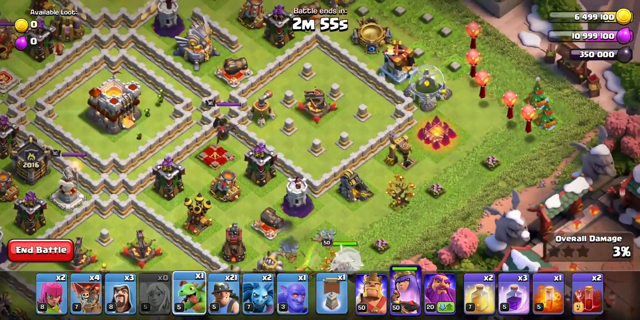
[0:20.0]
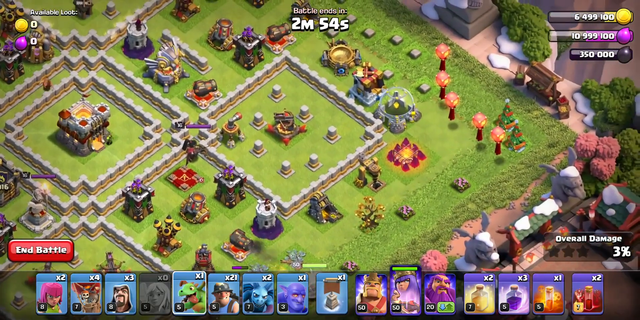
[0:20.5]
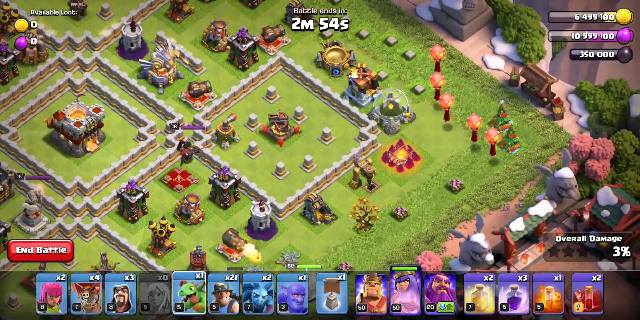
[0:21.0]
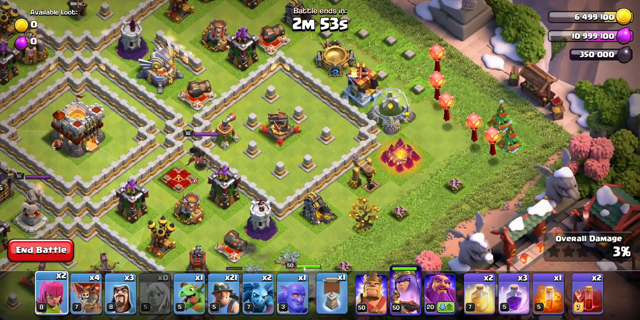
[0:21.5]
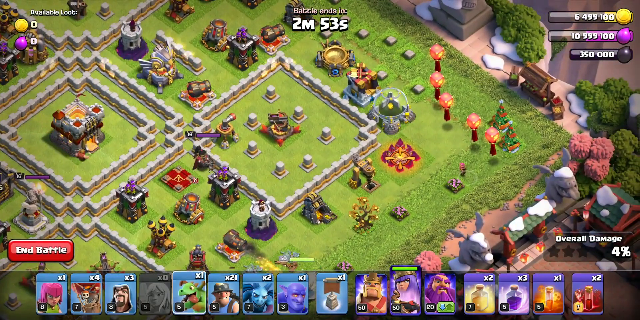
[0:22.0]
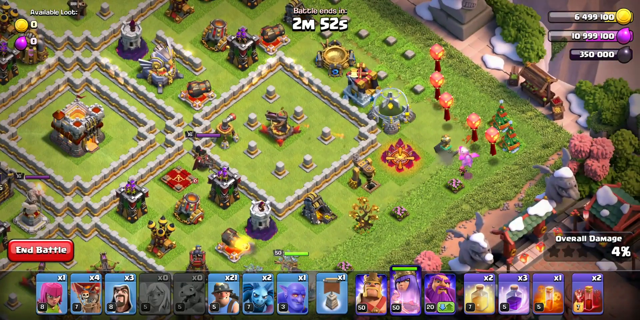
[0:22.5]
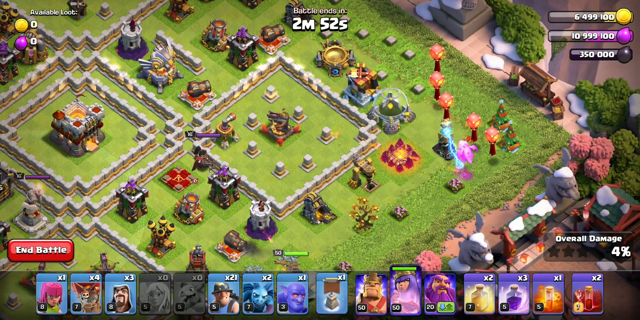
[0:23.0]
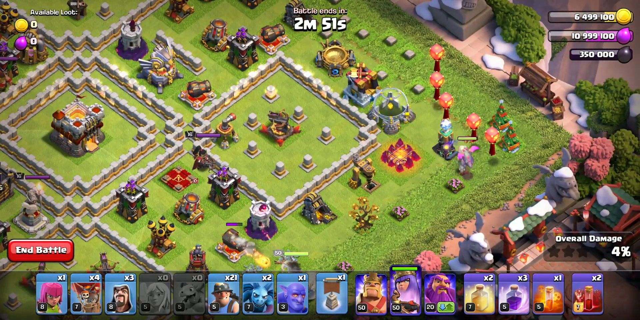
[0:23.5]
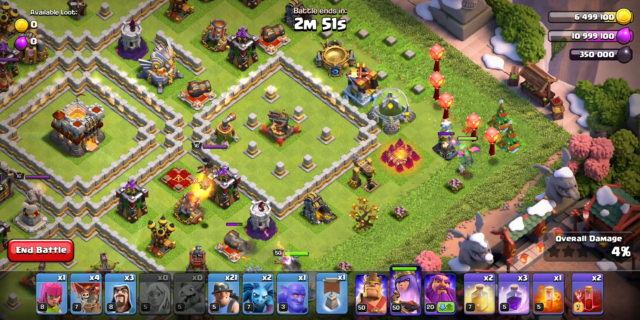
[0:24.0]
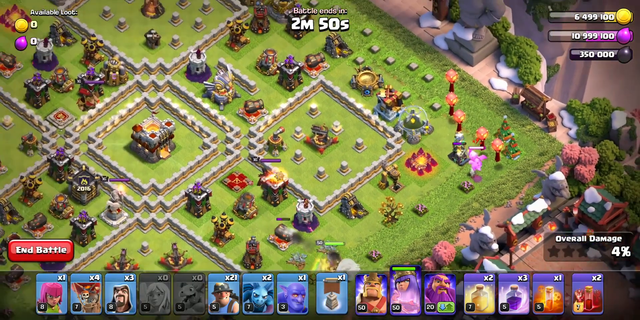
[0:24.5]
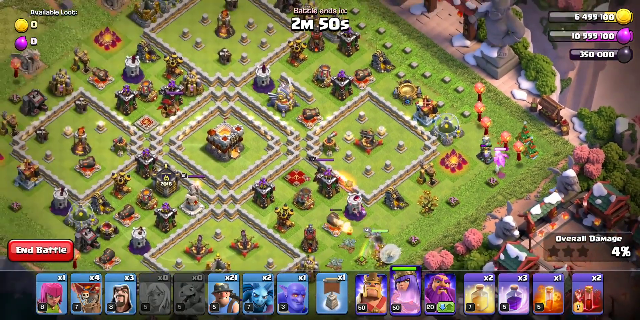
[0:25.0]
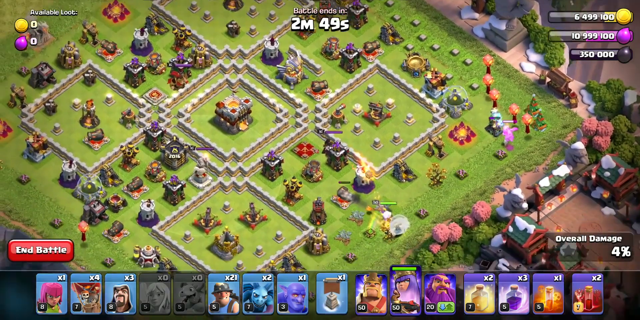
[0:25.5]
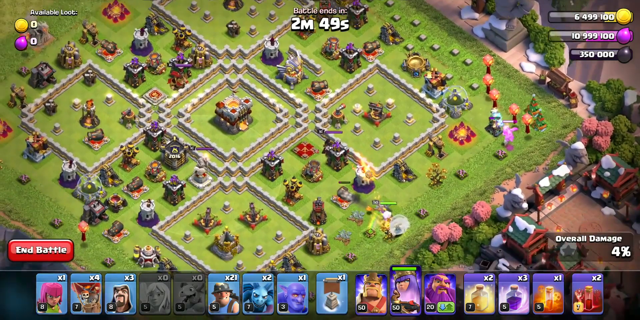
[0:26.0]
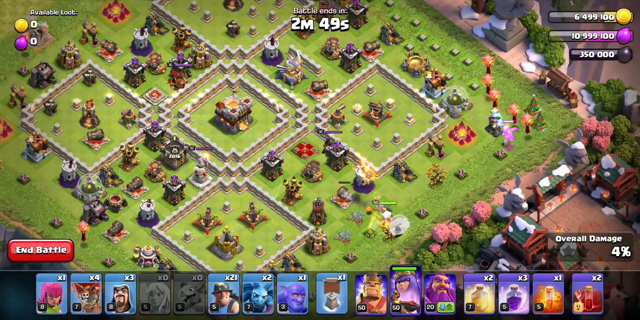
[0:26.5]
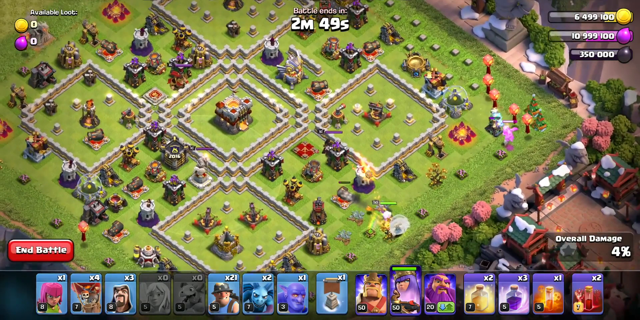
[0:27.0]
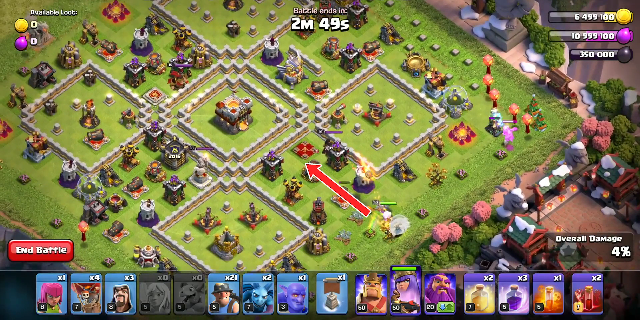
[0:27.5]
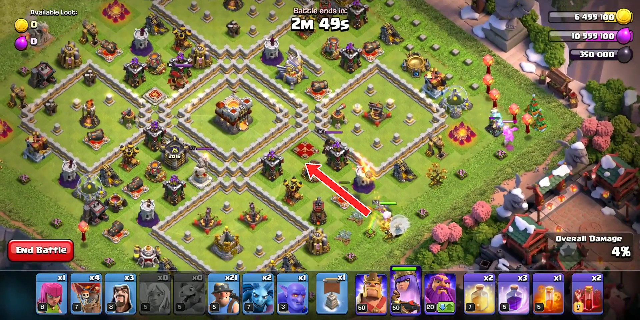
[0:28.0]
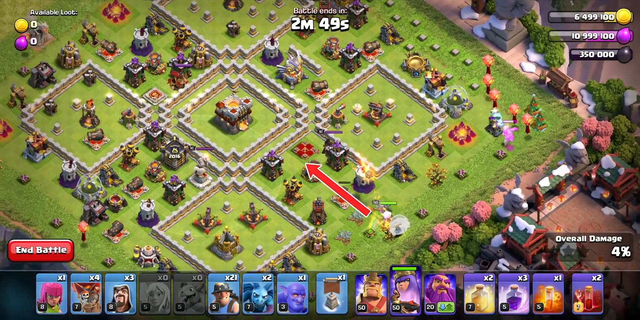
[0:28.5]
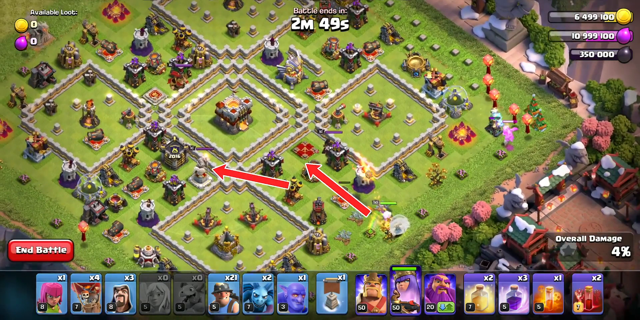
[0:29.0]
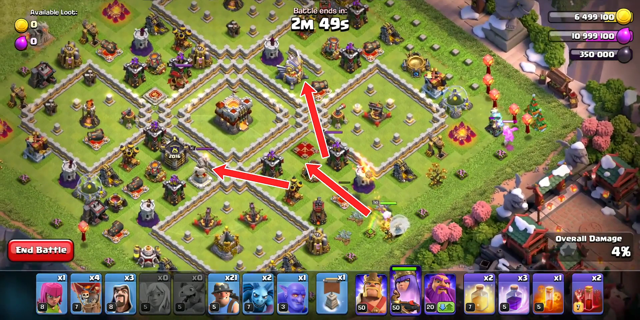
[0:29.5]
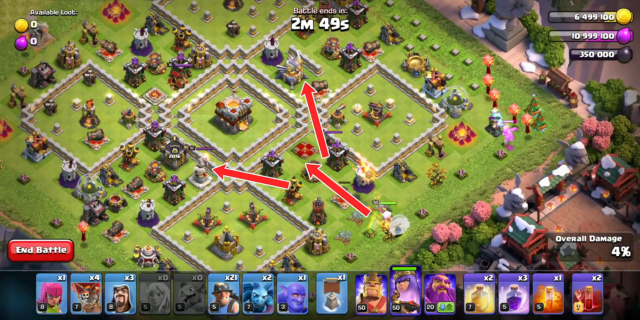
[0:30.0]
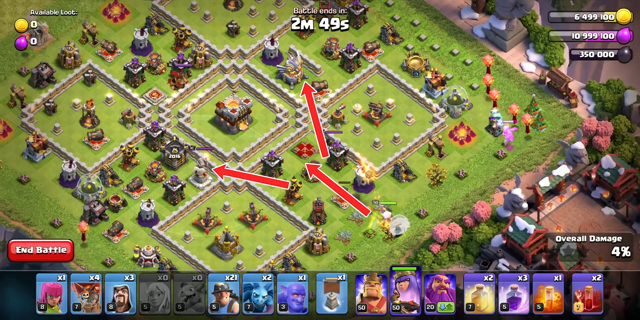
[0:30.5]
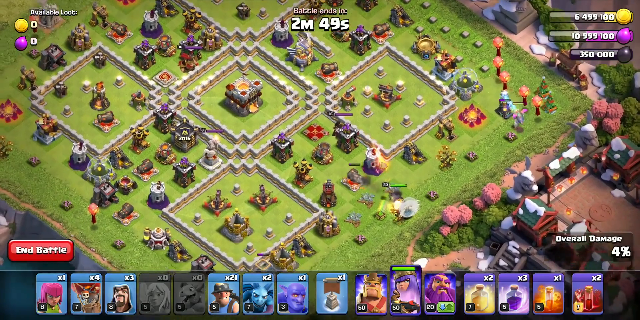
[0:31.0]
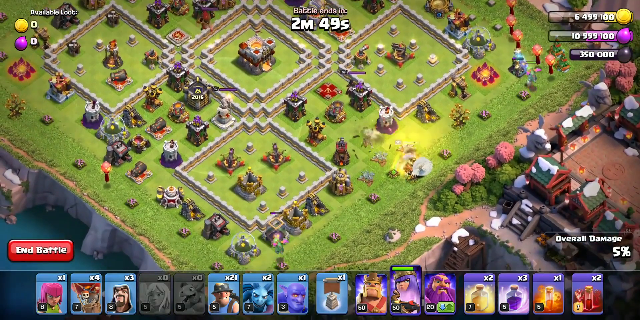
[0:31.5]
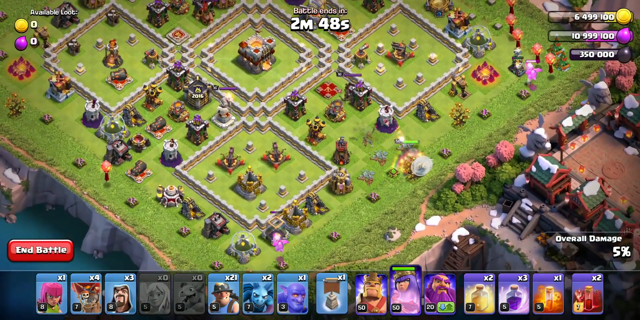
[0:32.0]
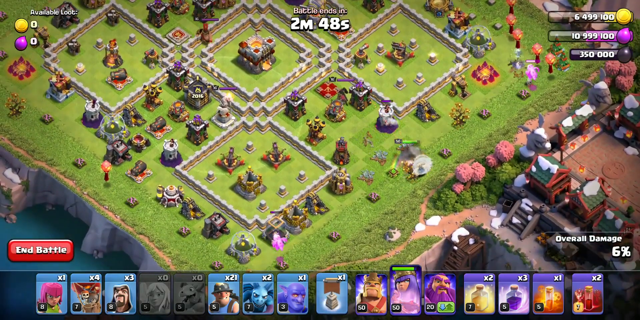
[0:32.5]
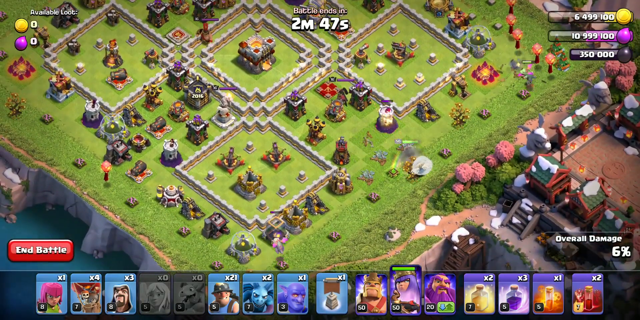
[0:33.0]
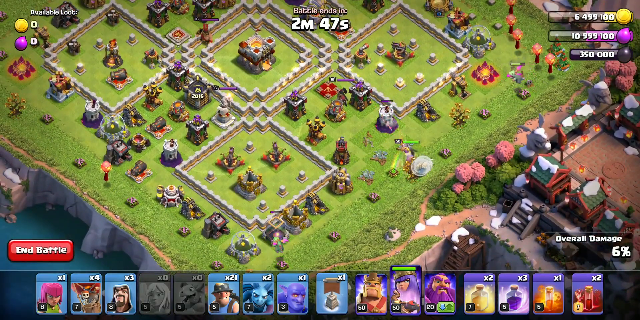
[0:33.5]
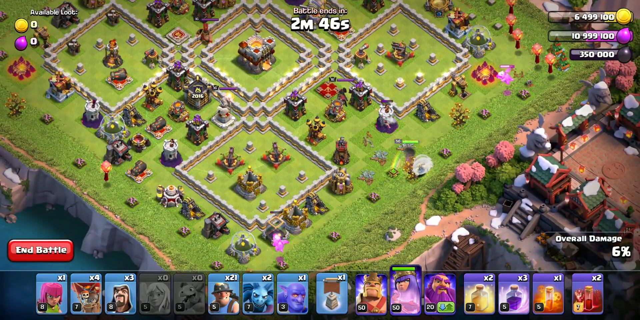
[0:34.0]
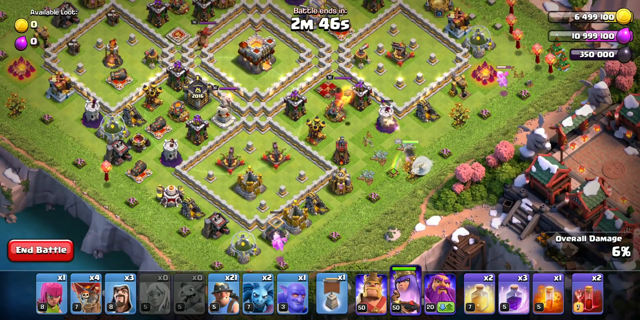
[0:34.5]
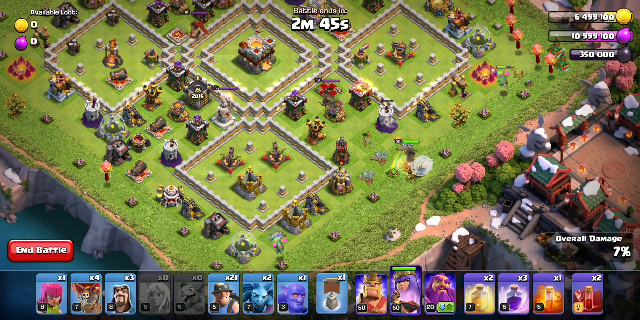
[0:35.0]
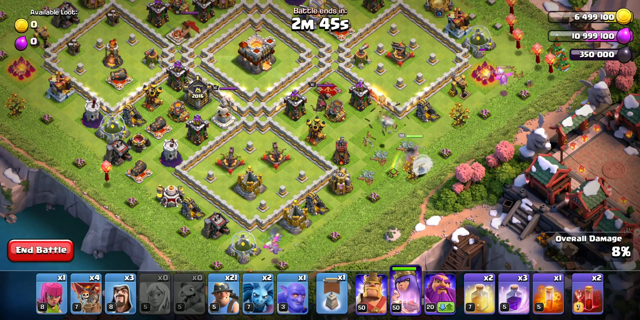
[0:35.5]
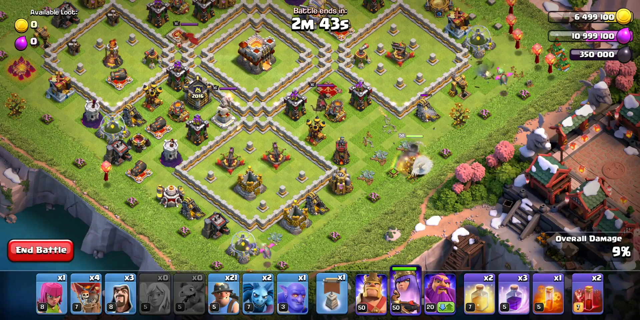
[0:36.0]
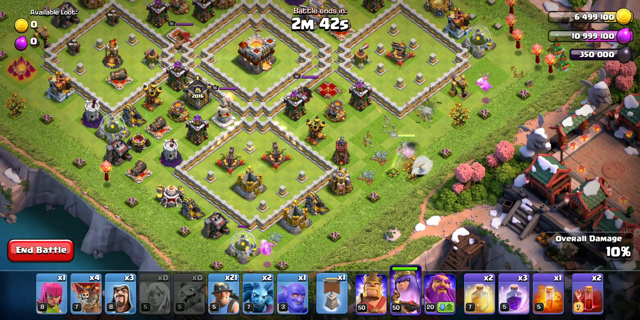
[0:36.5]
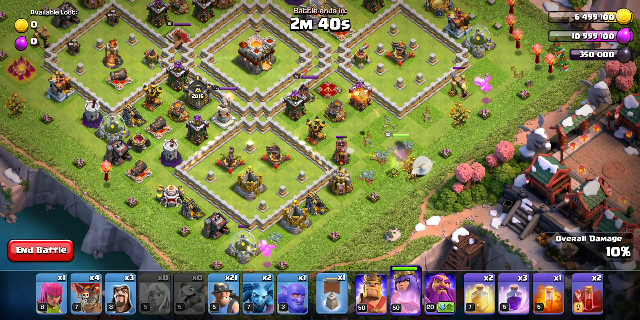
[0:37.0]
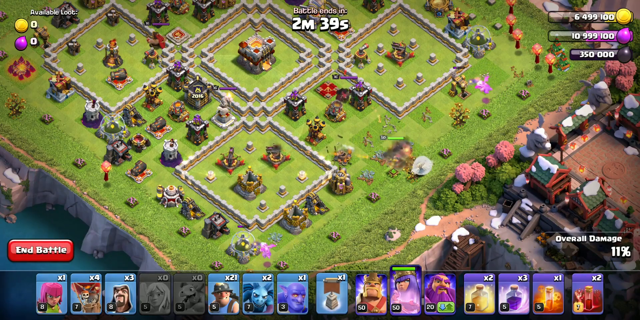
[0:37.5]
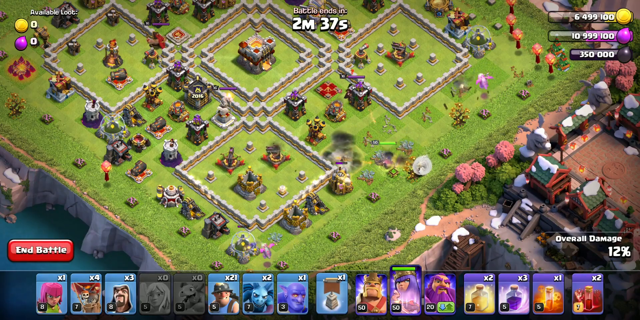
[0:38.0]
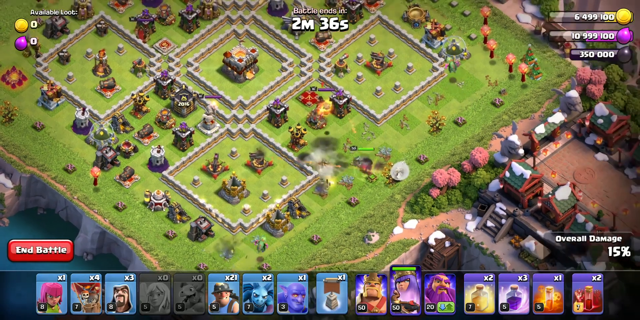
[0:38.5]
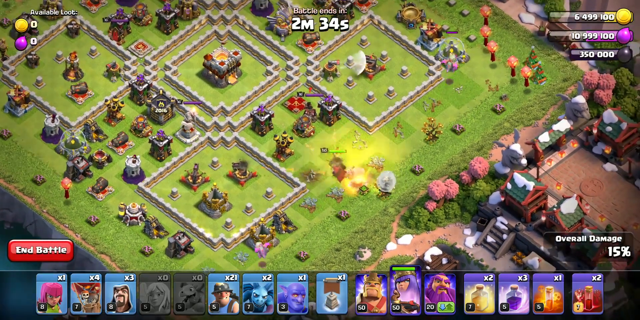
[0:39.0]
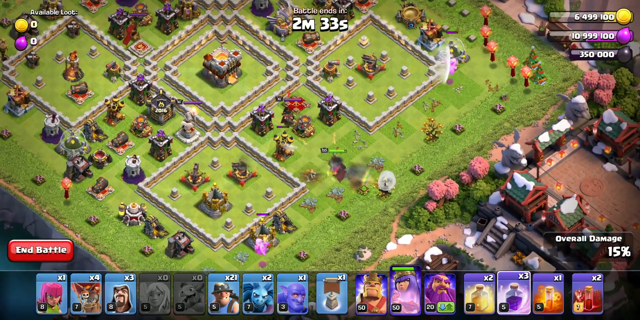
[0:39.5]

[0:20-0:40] As the player places units, dragons fly and do damage on the far right, while the opponent uses cannons. A highlighted red arrow shows where the units are being placed and where they will go. A mage tower has wizards throwing magic. One of the units destroys the middle area. What appears to be a large arrow gun on the far top right shoots at the little mini dragon. What appears to be an archer looks idle as it paces back and forth. Several towers are destroyed, with at least 4-5 units destroyed completely, leaving rubble or a shadow where they were placed. The timer drops below 3 minutes, to around 2 minutes and 40 seconds.